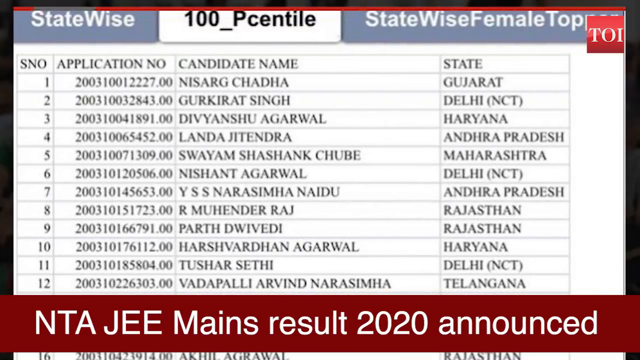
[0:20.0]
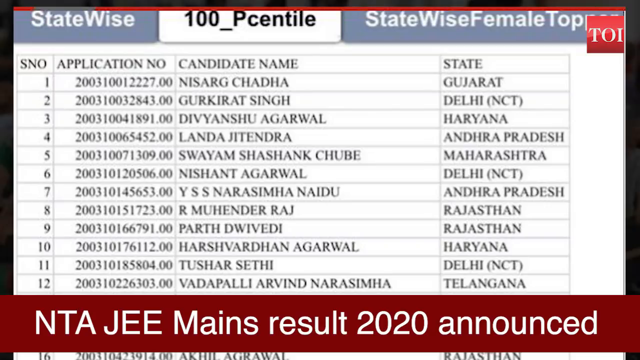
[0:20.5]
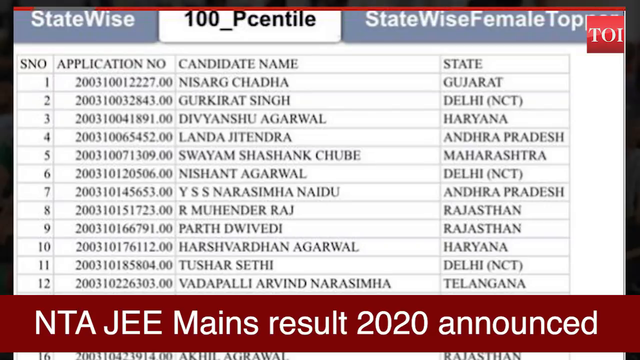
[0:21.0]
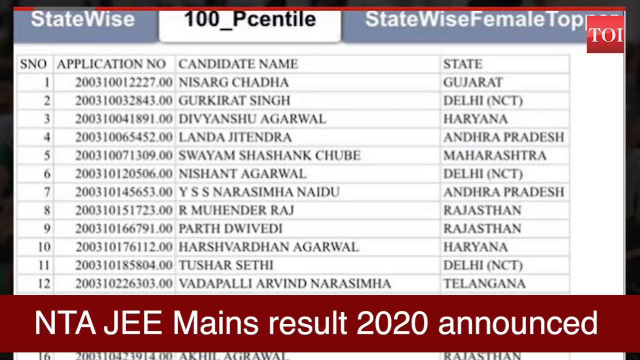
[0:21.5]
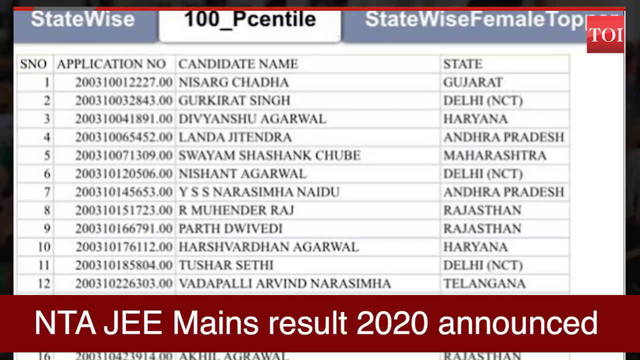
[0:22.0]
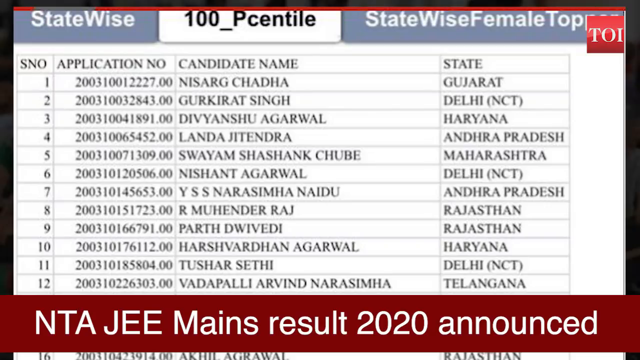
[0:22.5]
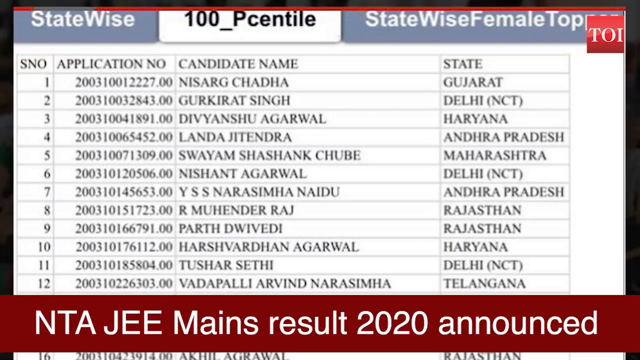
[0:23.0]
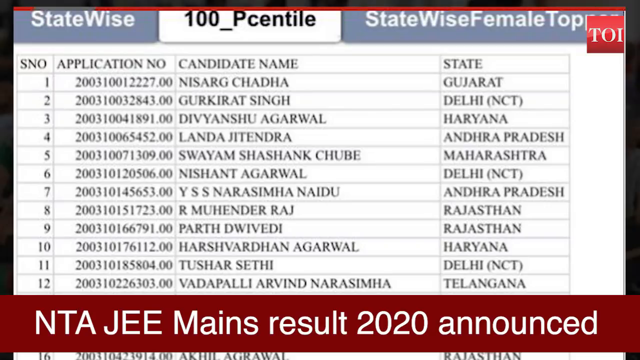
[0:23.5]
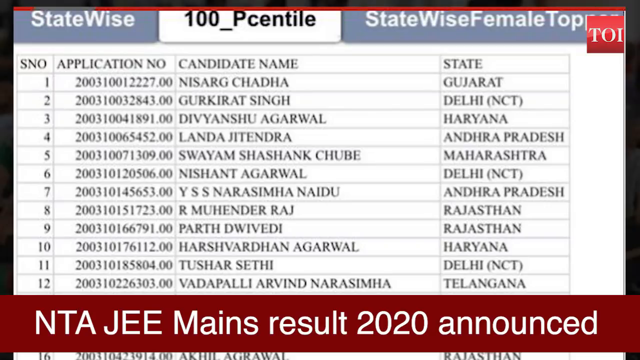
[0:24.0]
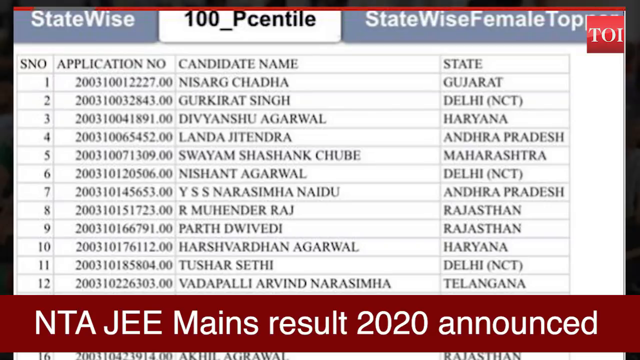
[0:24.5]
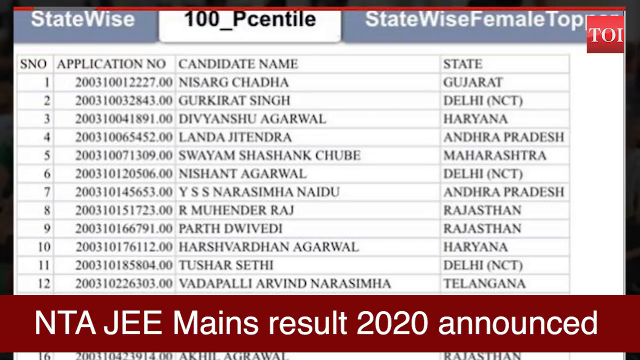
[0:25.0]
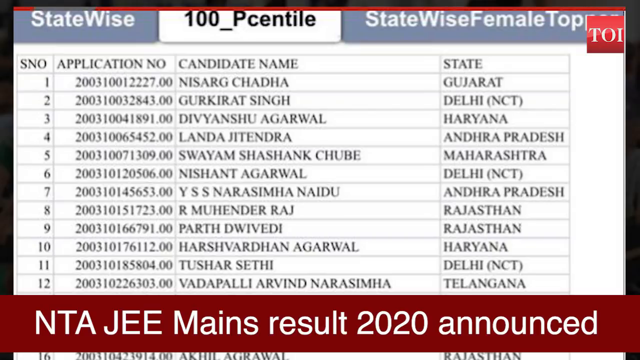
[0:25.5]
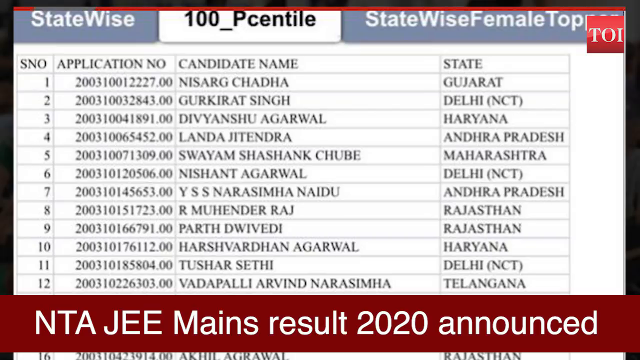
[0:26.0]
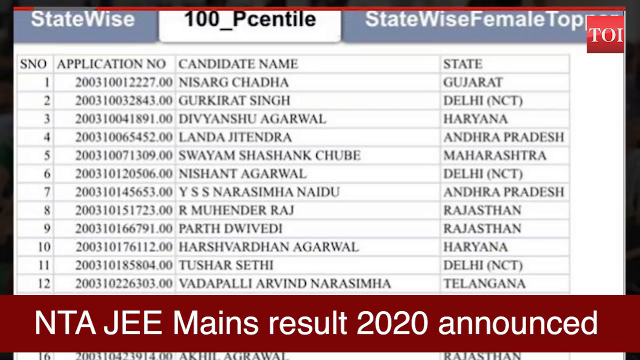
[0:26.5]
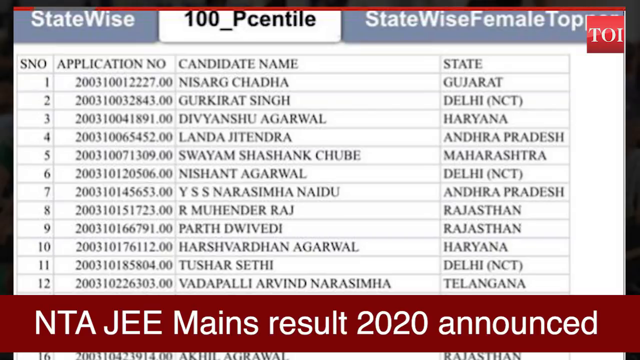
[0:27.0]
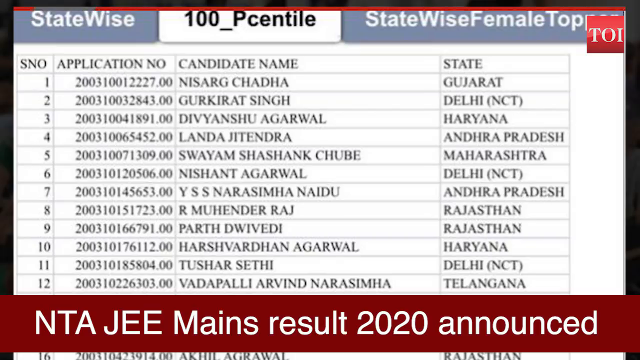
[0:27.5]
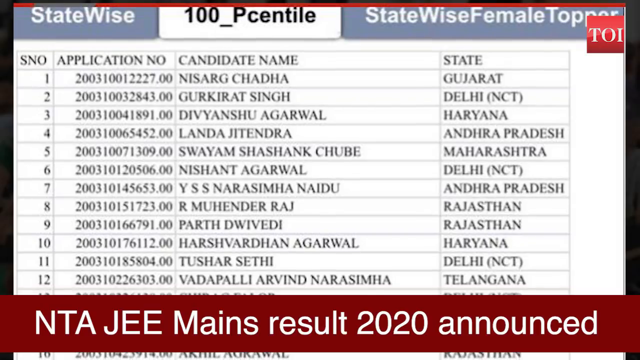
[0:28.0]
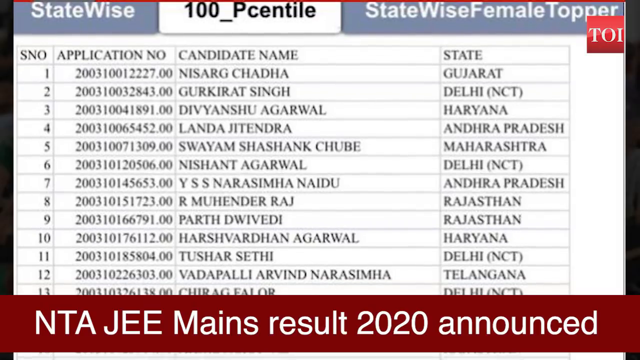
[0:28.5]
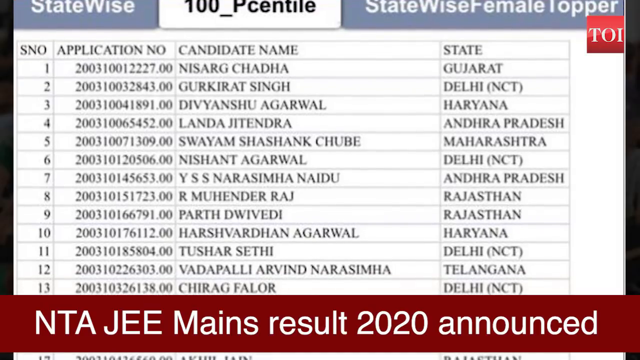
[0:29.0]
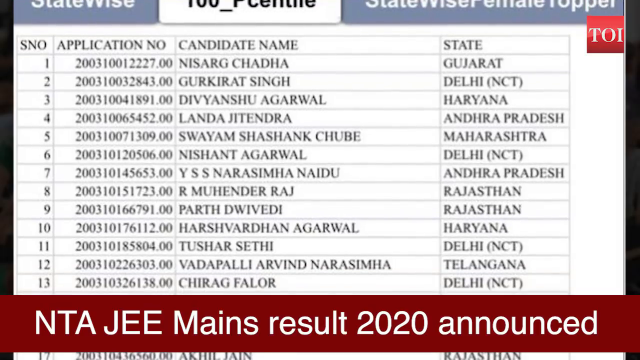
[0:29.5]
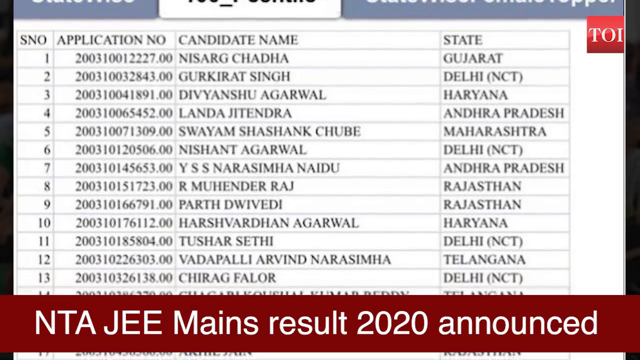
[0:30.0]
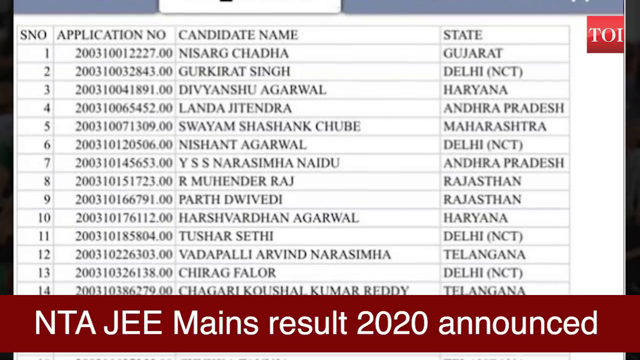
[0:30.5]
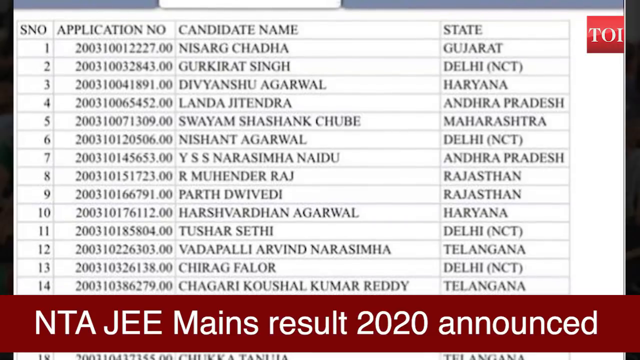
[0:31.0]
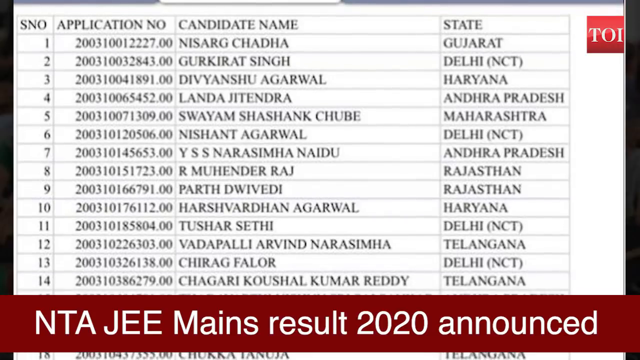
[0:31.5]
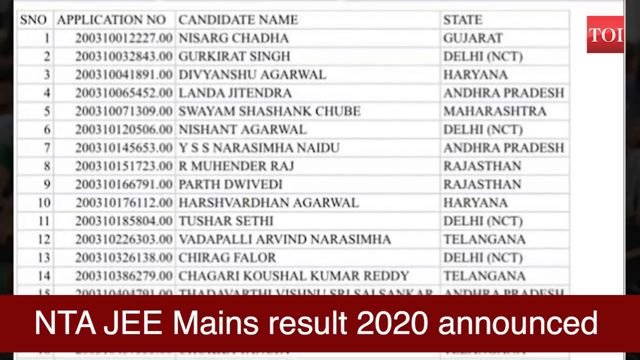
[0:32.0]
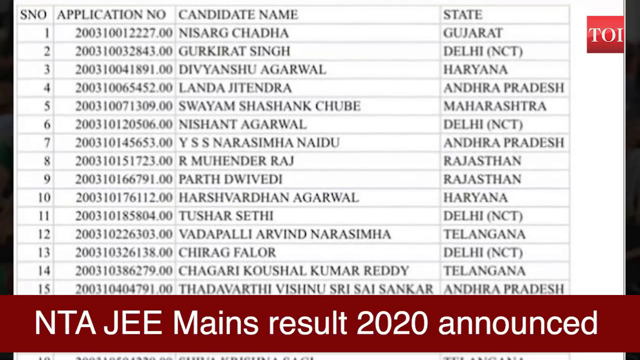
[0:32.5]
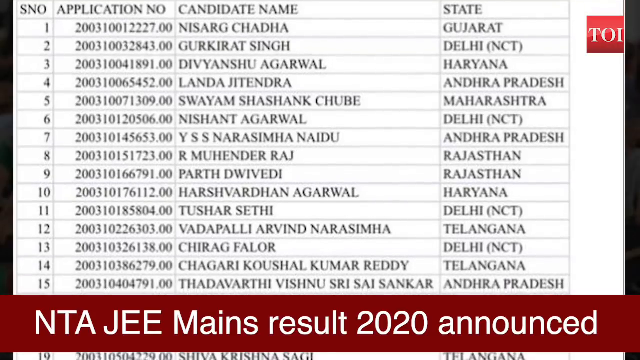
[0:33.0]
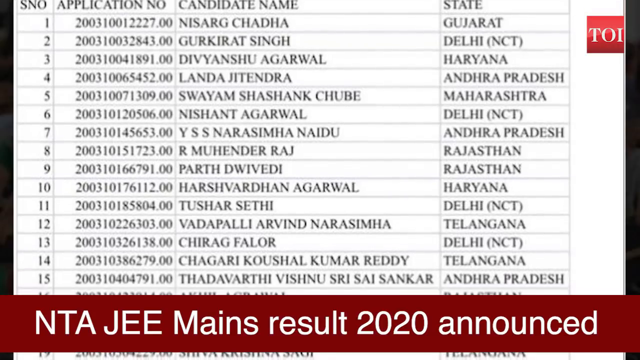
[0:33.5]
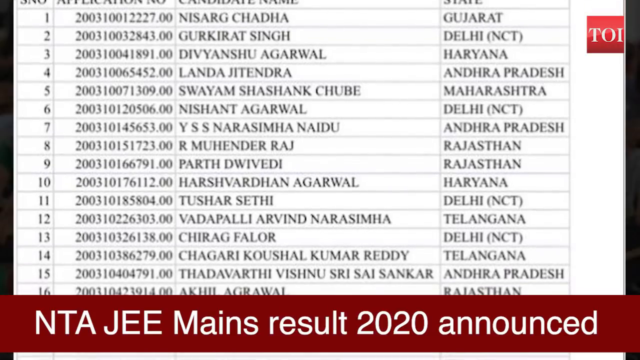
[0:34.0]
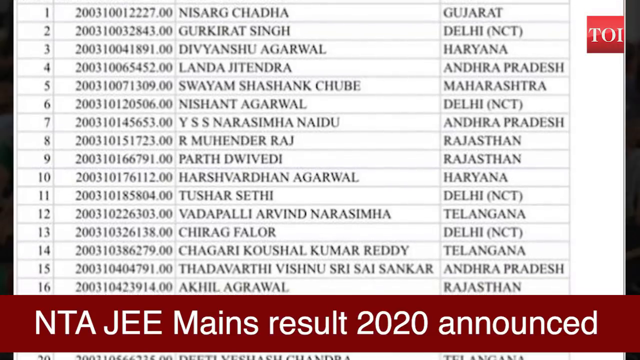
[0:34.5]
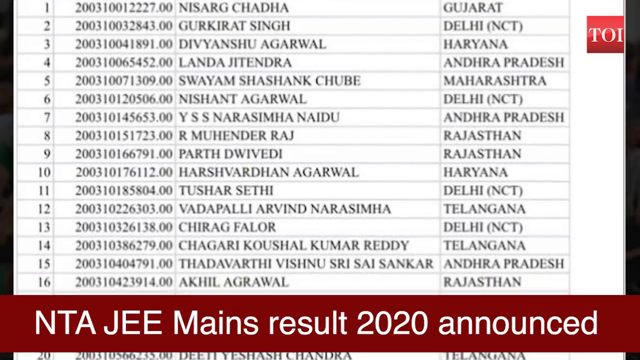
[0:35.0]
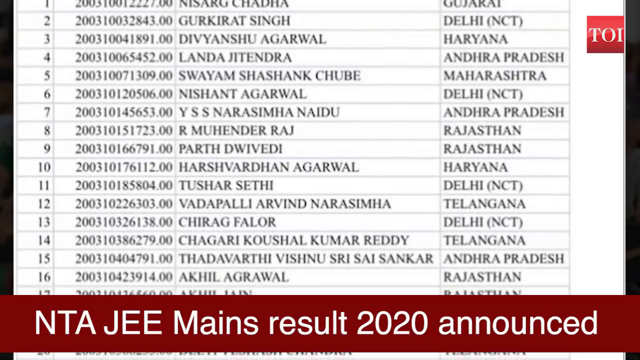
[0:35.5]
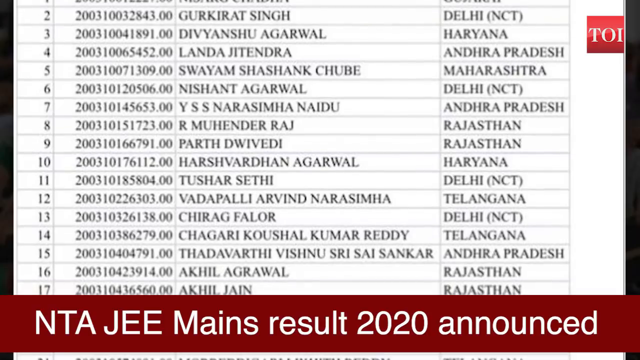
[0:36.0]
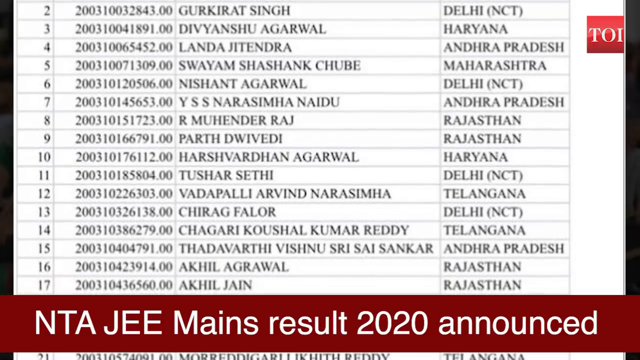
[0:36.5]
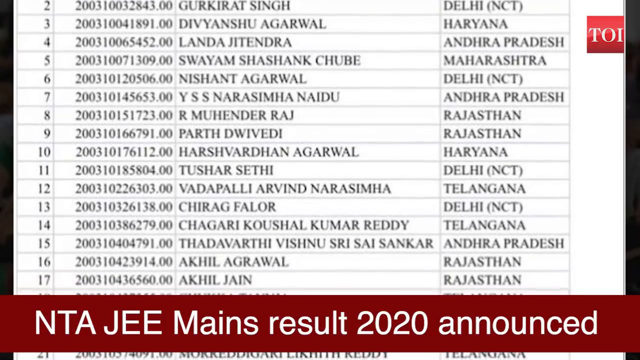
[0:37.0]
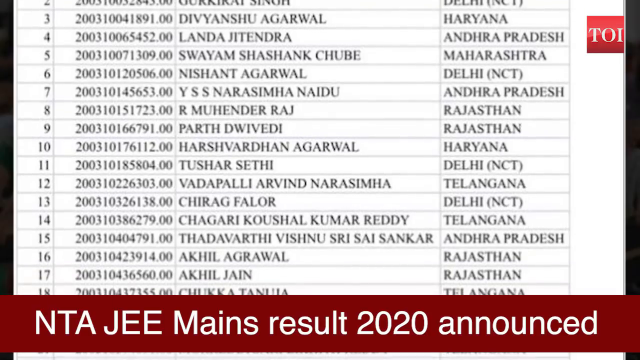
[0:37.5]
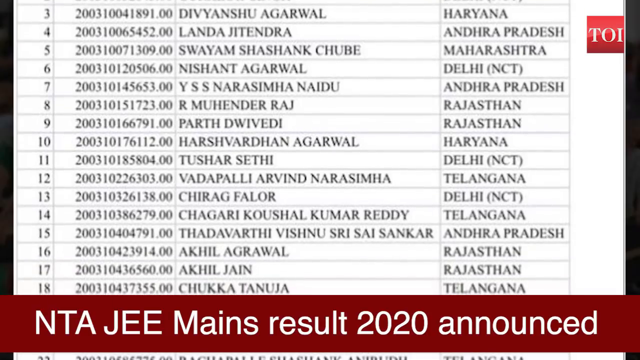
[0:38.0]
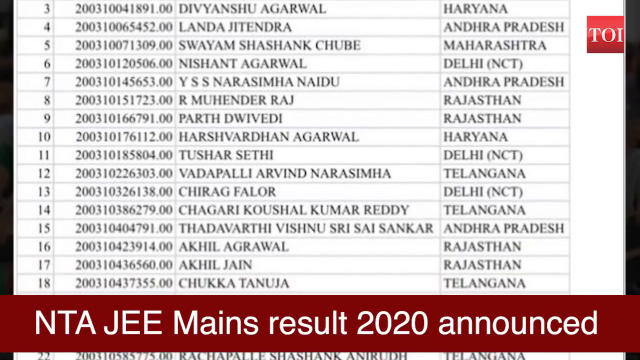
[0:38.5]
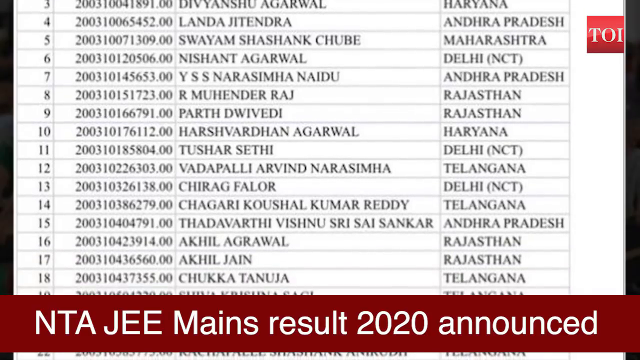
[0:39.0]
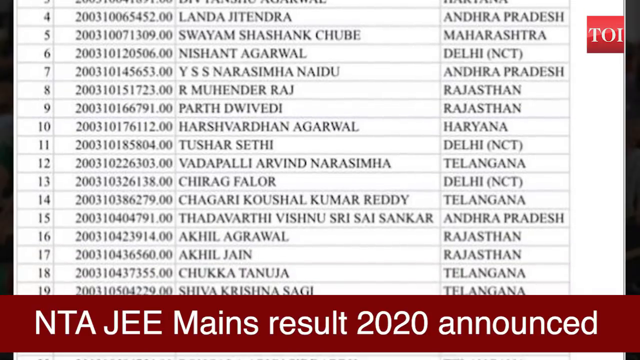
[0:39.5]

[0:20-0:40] A list of various candidates in the JEE test is shown. Starting from the left, the list gives the SNO number, followed by the applicant's application number, which begins with the numbers 2003, then an 8-digit number followed by a .00 designation. The next column has the candidate name, with the last name first followed by the first name. The last column, on the far right, gives the state the candidate comes from. The camera scrolls down through the candidates until it reaches number 19. All of the names appear to be Indian or Eastern European names, and all of the listed states are in the Indian or New Delhi region. At the top of the graph, on the left, is the word "StateWise", followed by a white box that says "100_Pcentile", and to the right it says "StateWiseFemal Topper".